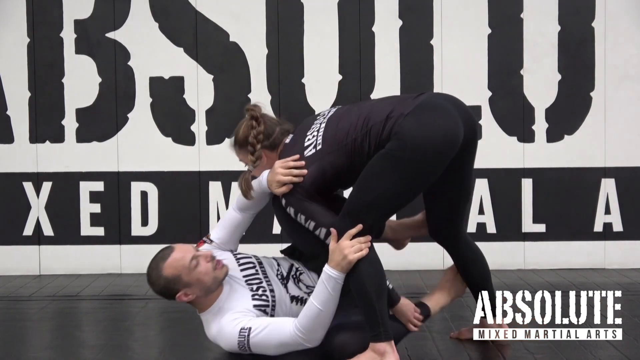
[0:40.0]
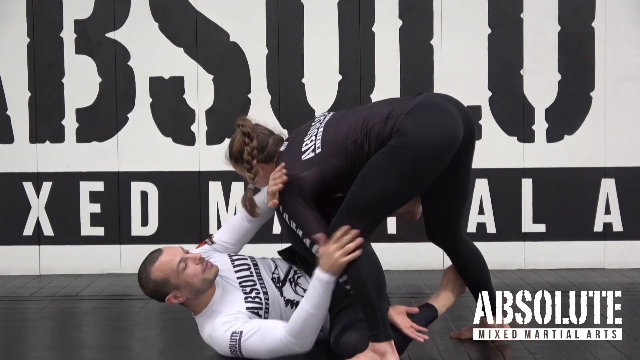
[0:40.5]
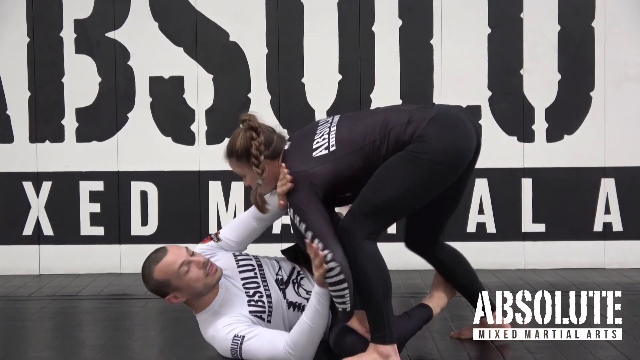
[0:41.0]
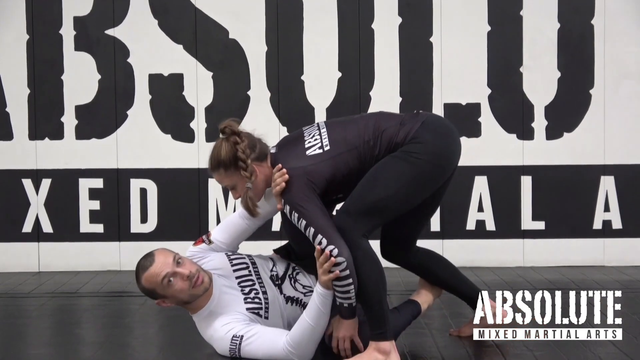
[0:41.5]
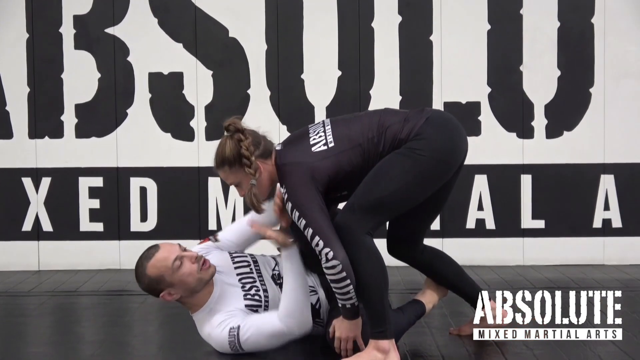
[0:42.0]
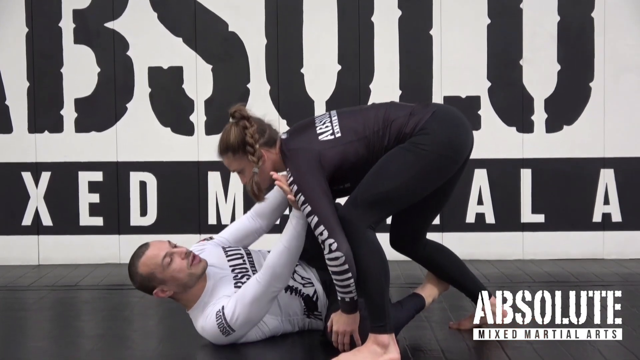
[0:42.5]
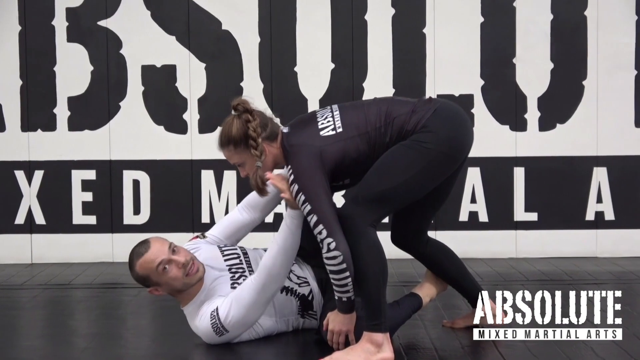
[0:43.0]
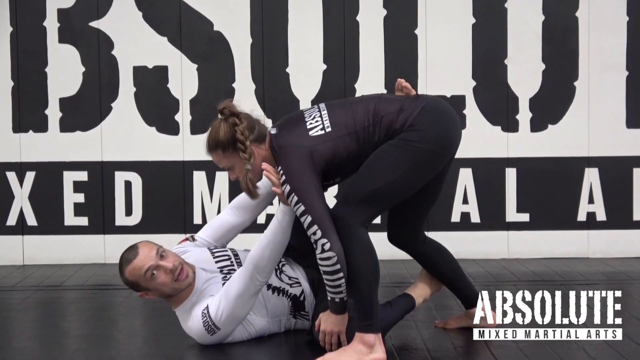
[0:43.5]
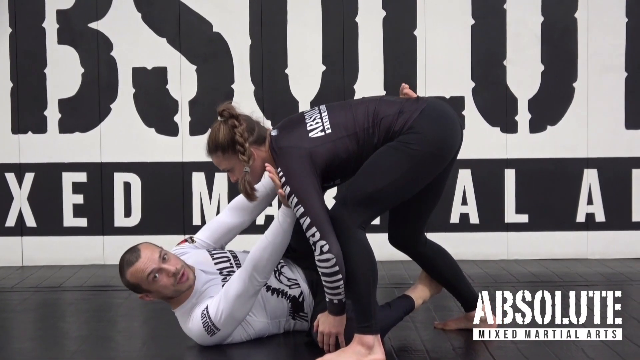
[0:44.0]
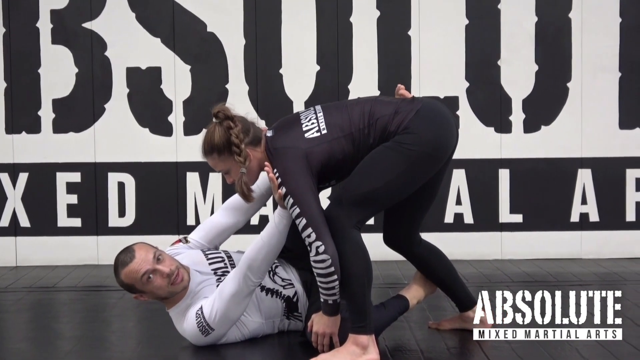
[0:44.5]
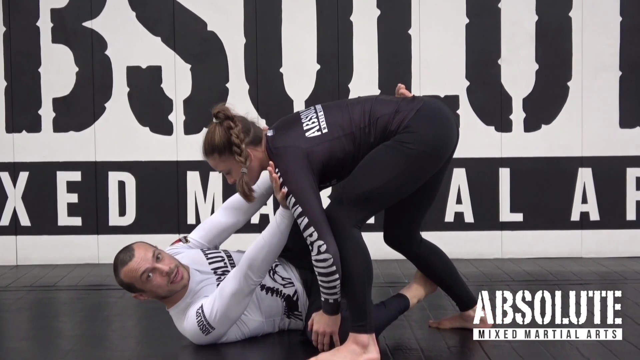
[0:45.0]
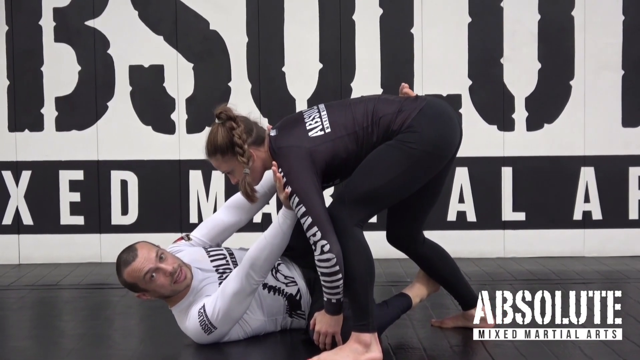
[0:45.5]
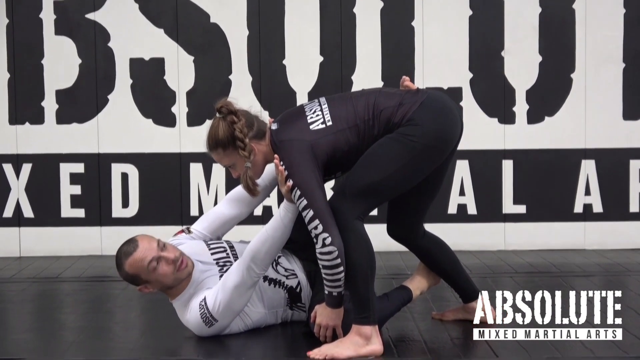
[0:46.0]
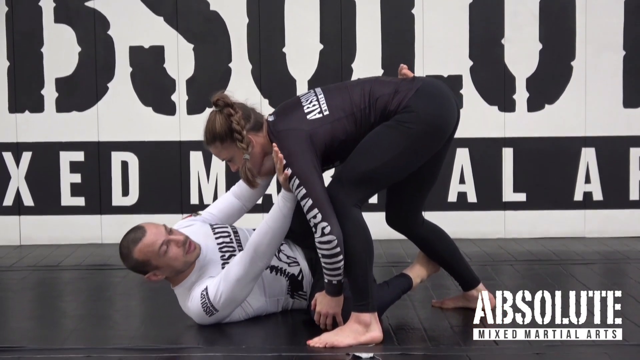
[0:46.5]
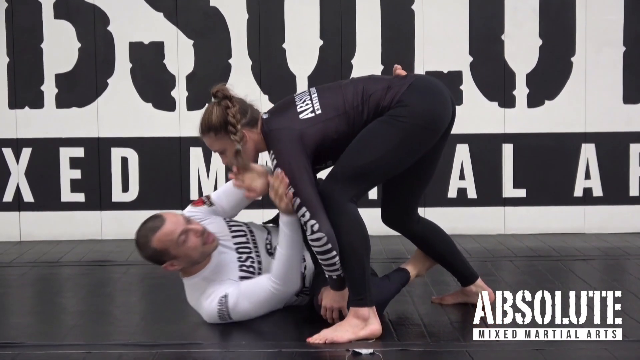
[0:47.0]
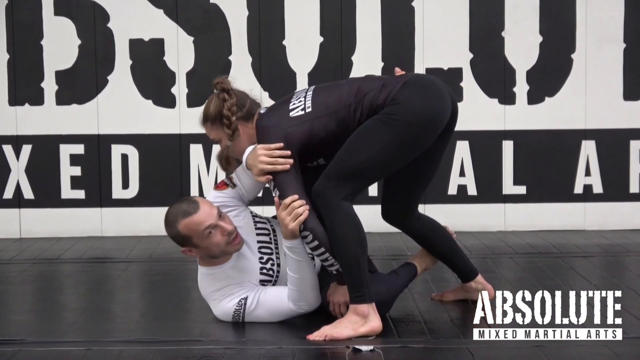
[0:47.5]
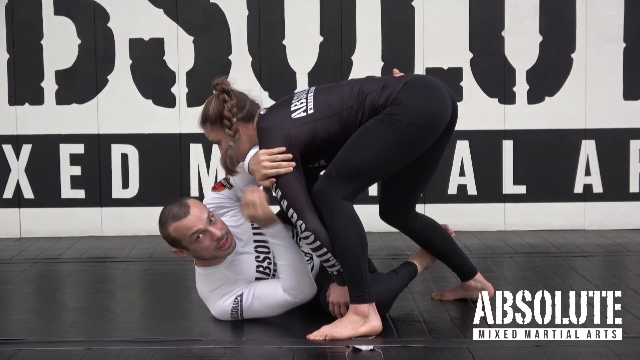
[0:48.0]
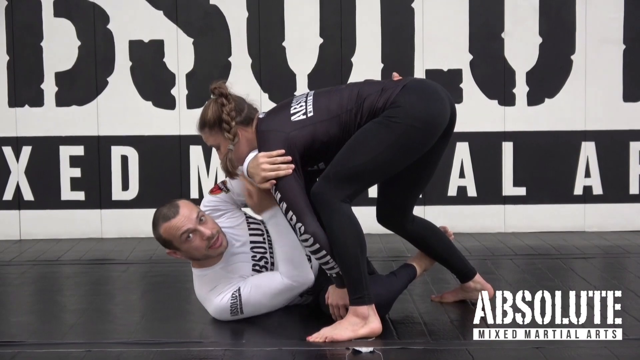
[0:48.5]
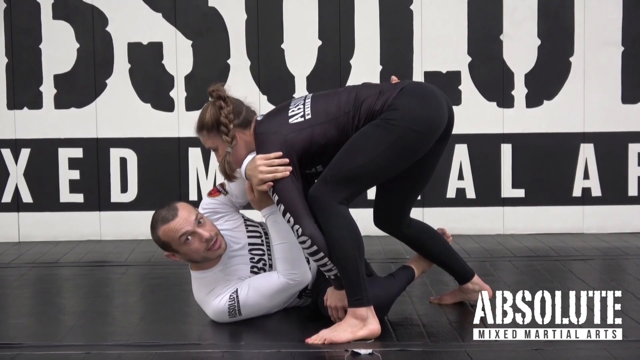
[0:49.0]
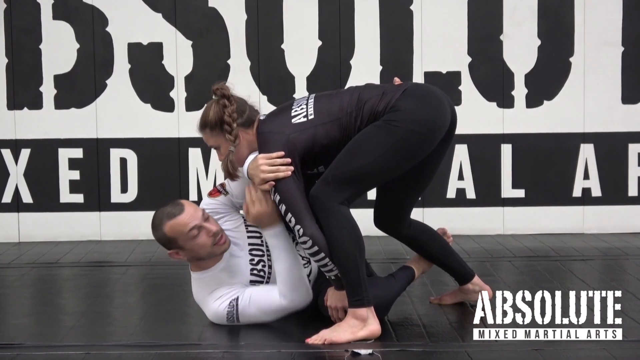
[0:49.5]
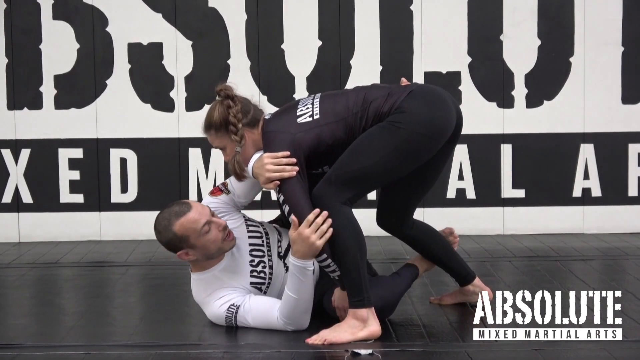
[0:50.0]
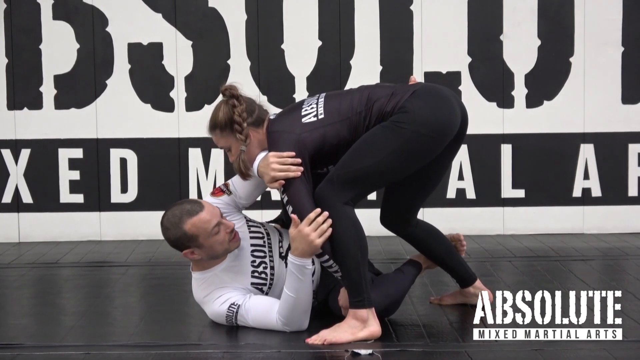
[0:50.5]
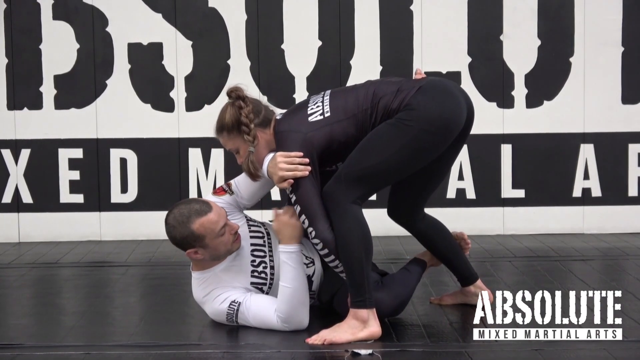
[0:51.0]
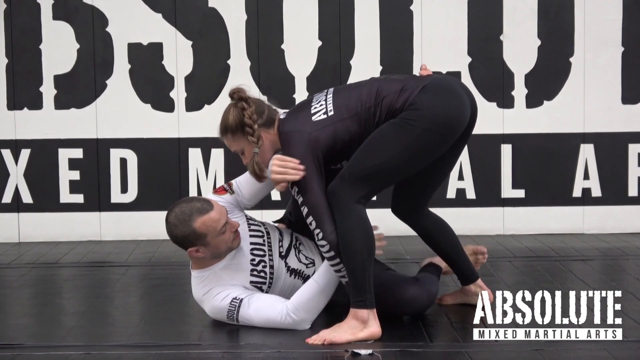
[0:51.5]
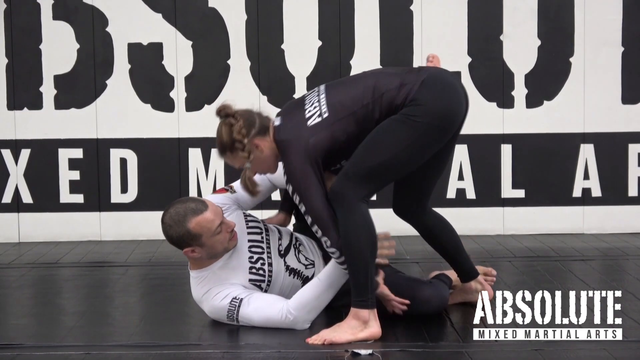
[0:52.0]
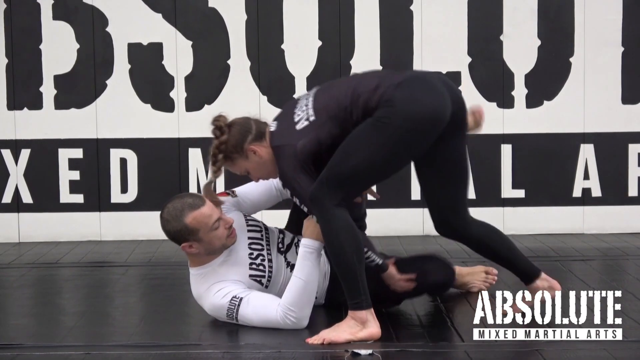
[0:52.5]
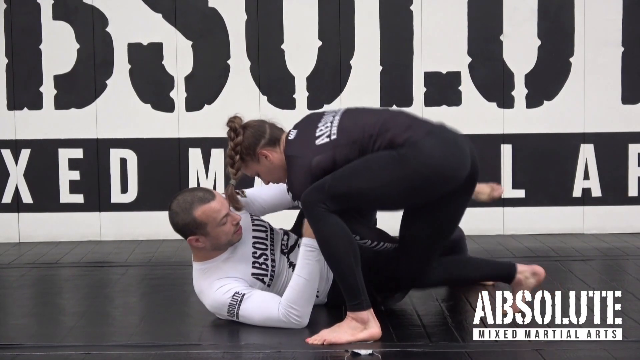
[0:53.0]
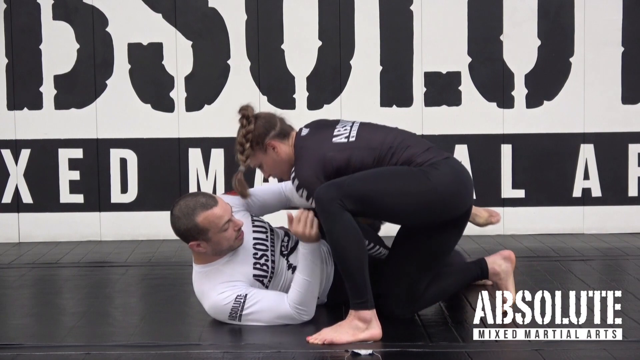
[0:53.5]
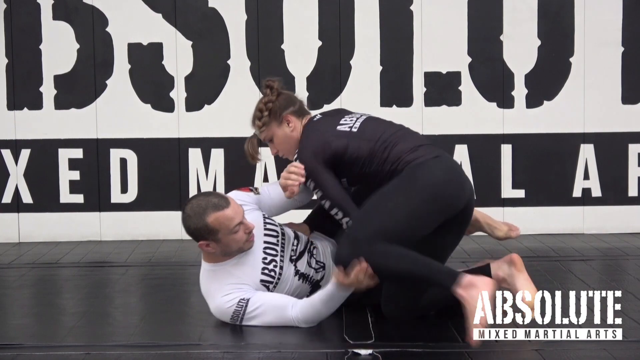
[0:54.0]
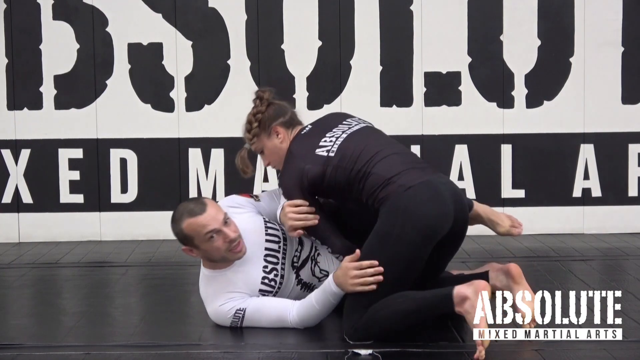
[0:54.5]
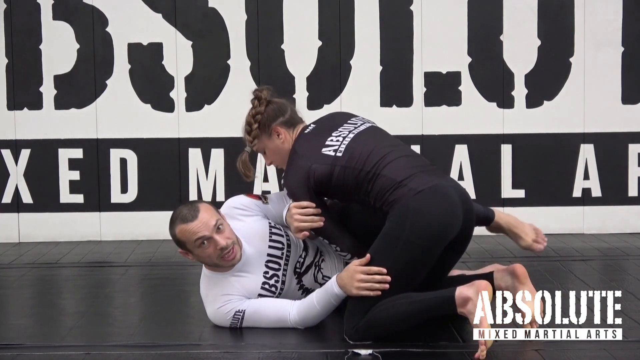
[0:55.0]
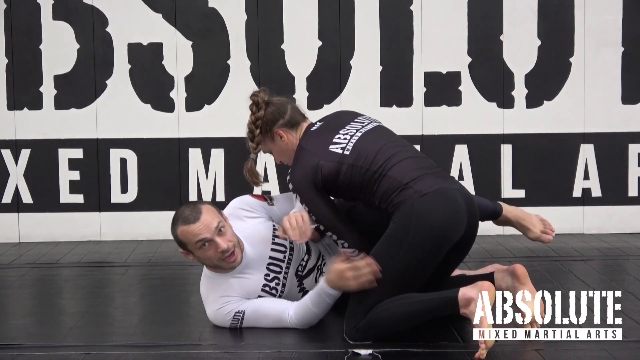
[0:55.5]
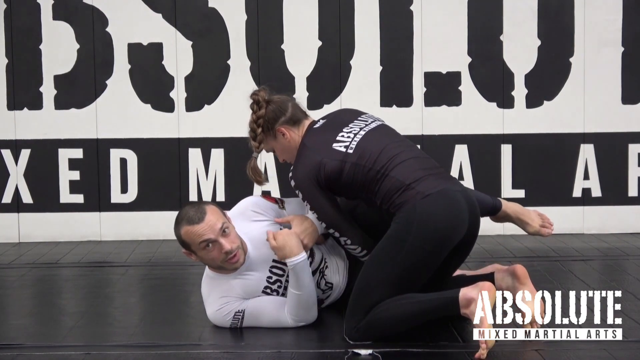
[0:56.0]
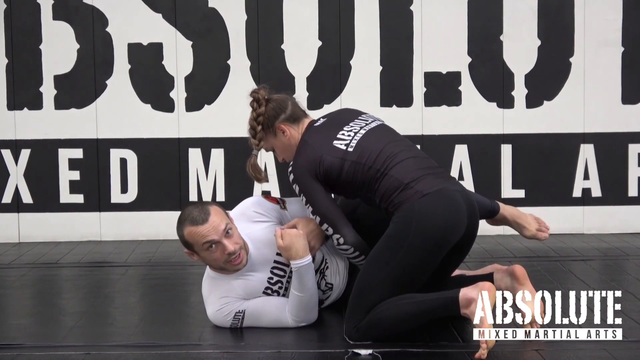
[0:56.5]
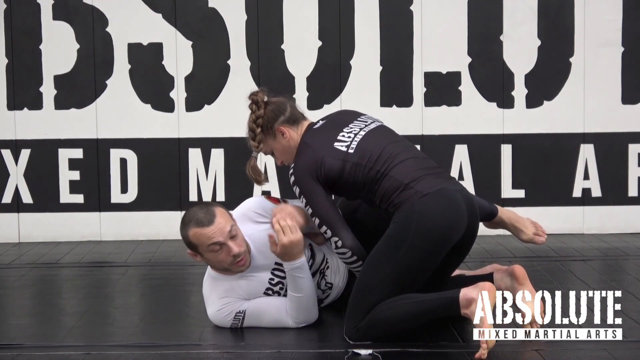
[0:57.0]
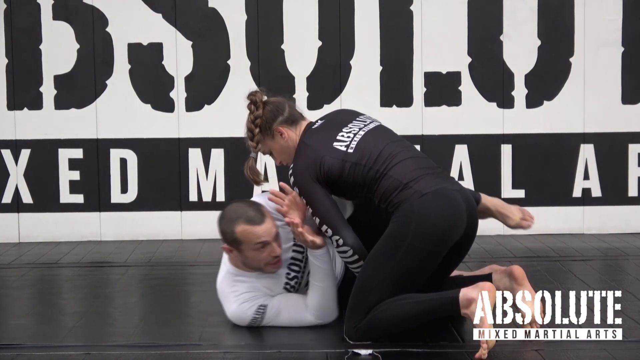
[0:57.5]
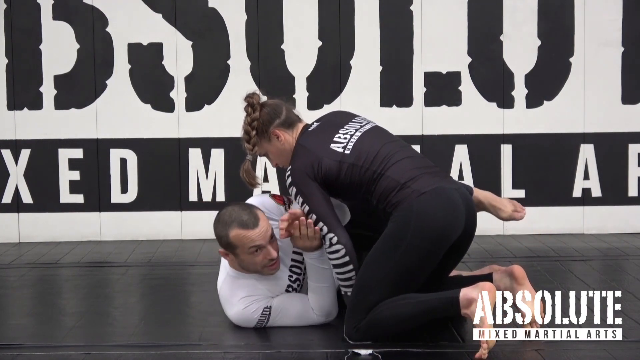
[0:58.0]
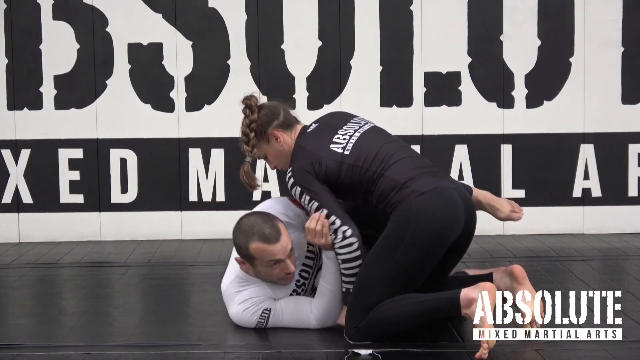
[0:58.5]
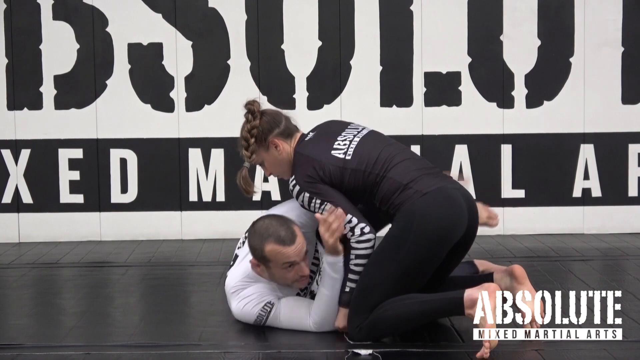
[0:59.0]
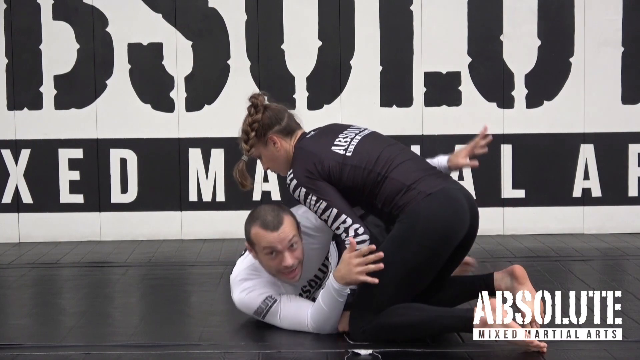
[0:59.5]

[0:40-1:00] In a Brazilian jujitsu gym, a white man with a very short haircut lies on his back, wearing a white shirt and spandex pants. Standing over him is a woman in all-black spandex clothing with white writing on it. Behind them is a white wall with black block print letters, and they are on a black wrestling-style mat. He has his hands on her shoulders as she leans over him and stands over his chest, while he talks to the camera or possibly to a crowd. He places his hands on her shoulders and expresses different movements as he speaks, while she stands over him patiently. He then moves his hands onto her left arm, continuing to talk to the crowd or the camera and explaining the movements he makes. She slides on top of him, with one hand on his thigh and one hand by his stomach. He is now on his side with his arms touching her arm, then wraps his arms around her to change his position. He gives instruction as he makes these movements, talking towards the camera with his head facing it.